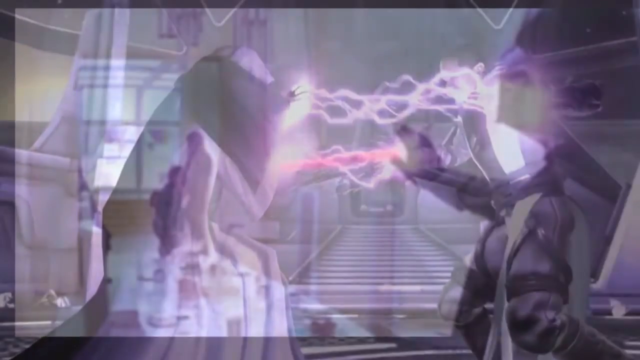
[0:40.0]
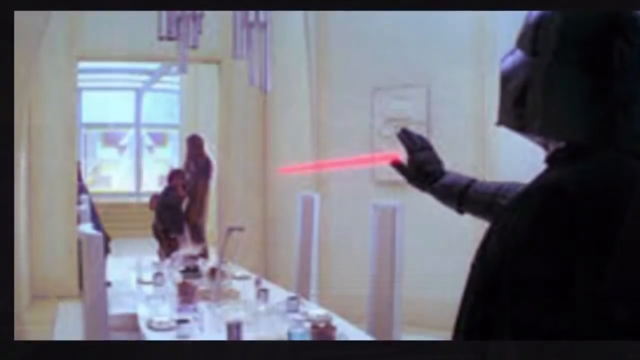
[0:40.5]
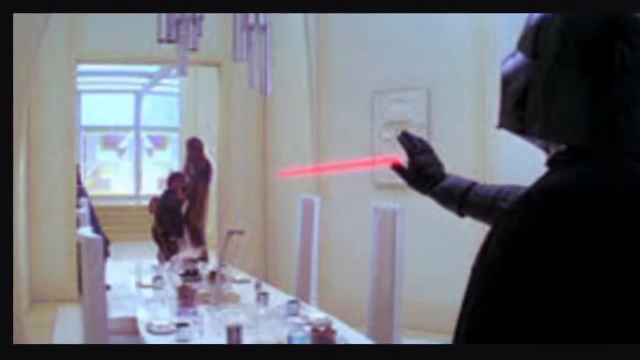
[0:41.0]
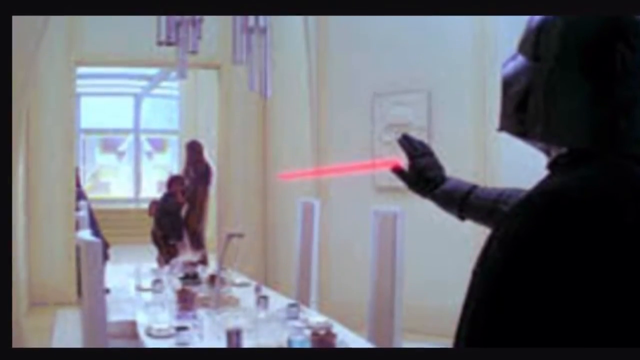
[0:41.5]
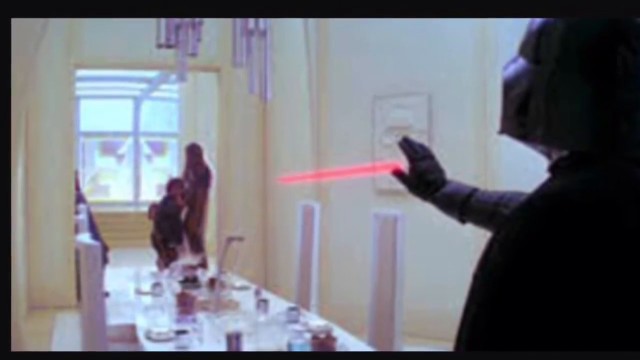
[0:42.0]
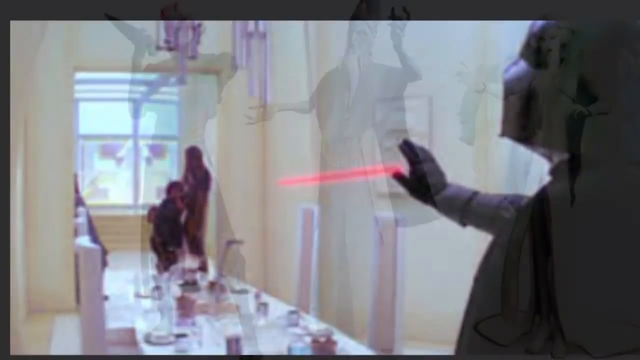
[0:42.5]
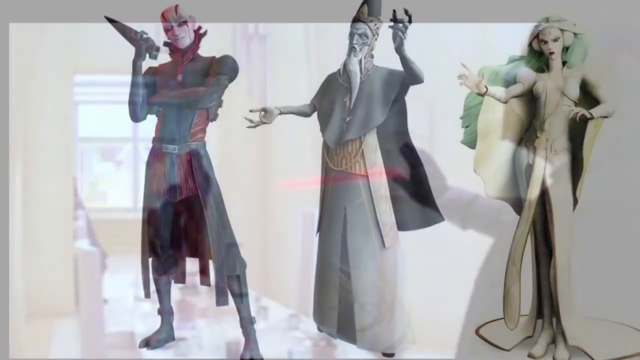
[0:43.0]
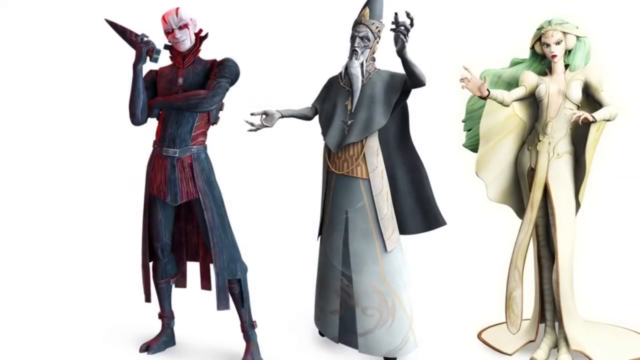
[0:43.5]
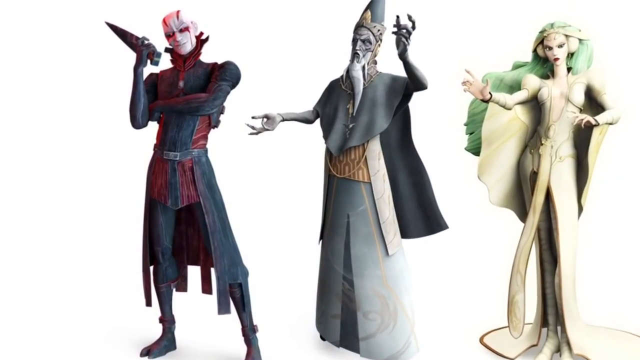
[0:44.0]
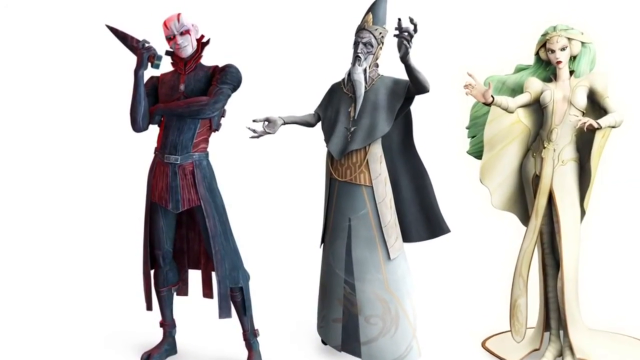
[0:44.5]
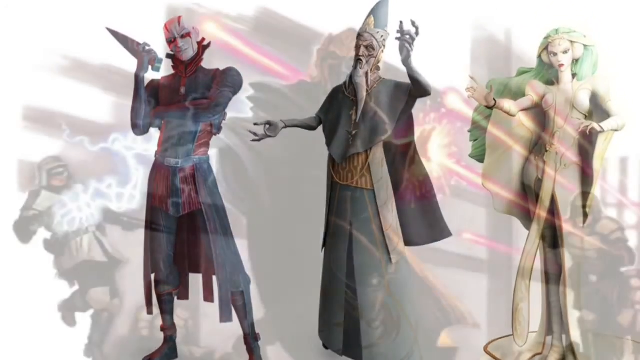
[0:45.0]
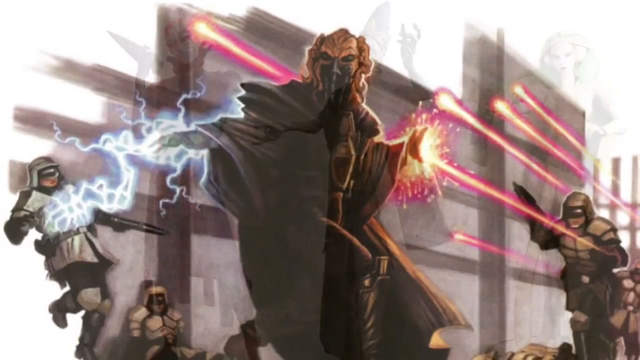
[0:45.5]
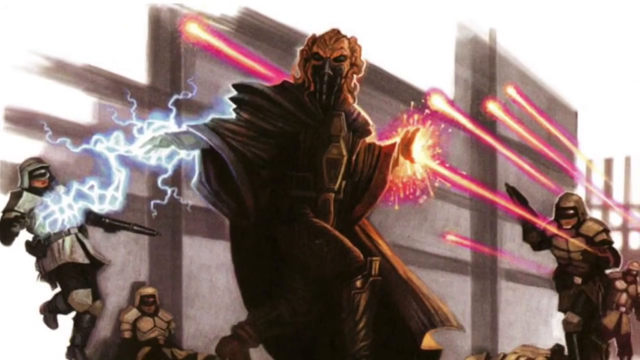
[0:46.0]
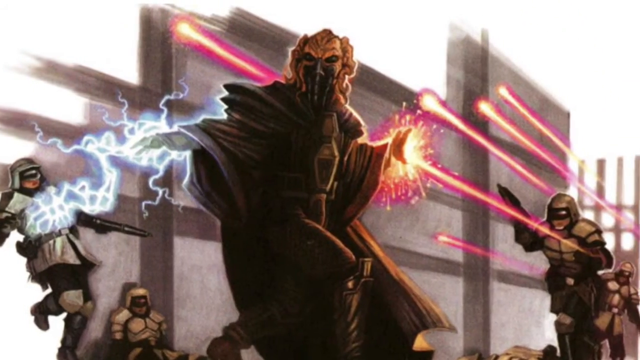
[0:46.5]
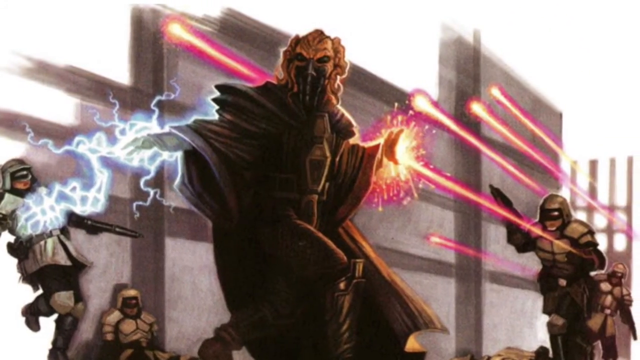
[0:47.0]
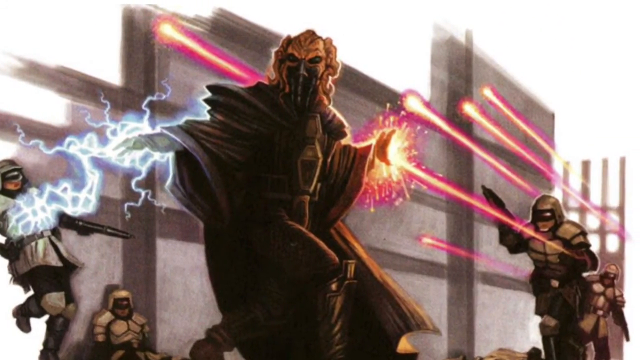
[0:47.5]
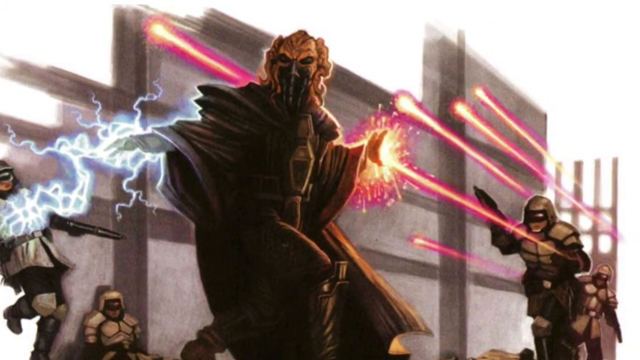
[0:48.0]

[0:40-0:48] Someone shoots a red light at people who are standing. Animated pictures show a lady and two men. The lady has long hair tucked under something like a jacket and wears a grey gown. The man on the left looks like a Halloween costume master. Different types of heroes use their powers to fight against evil. A man in the middle tries to defend himself from attacks on his left and his right.